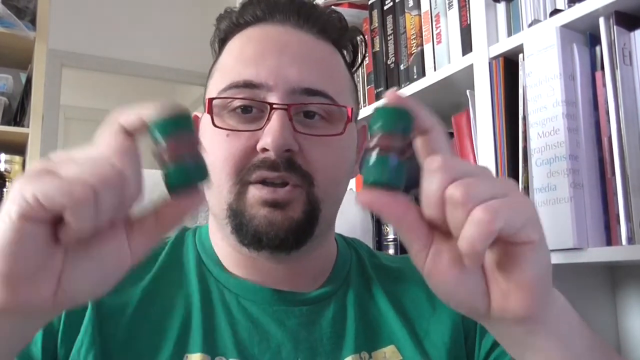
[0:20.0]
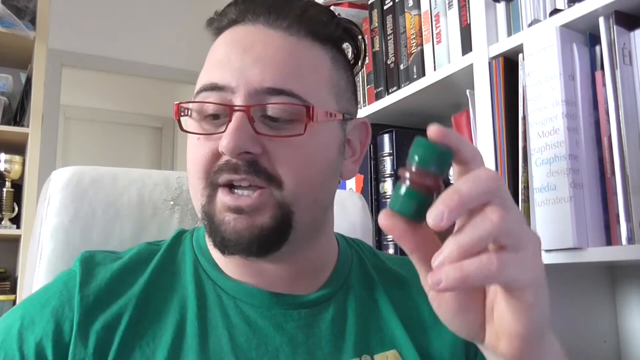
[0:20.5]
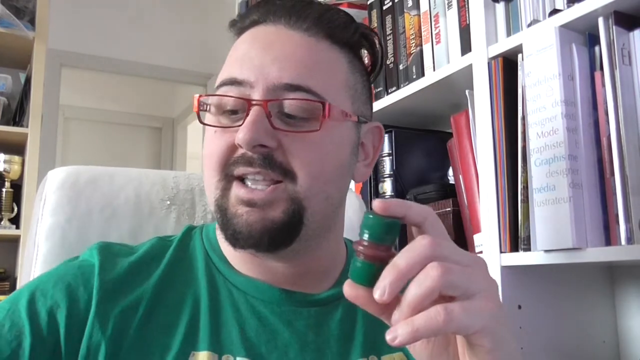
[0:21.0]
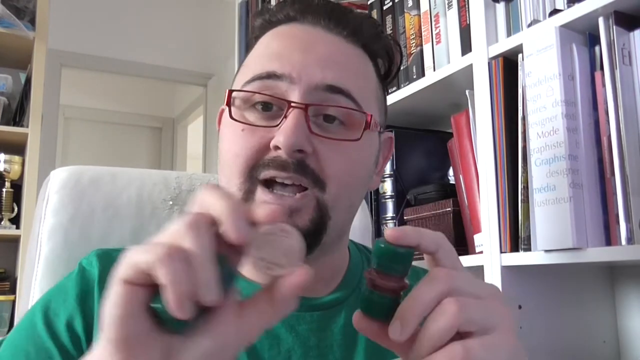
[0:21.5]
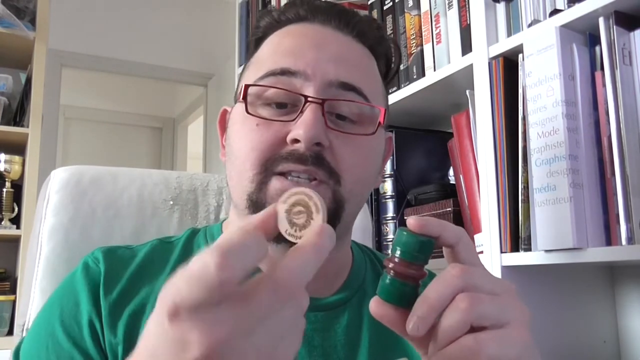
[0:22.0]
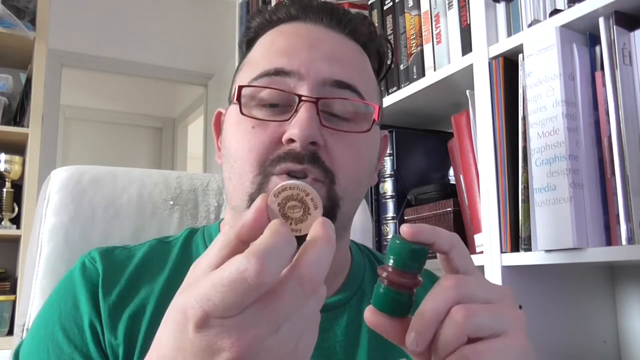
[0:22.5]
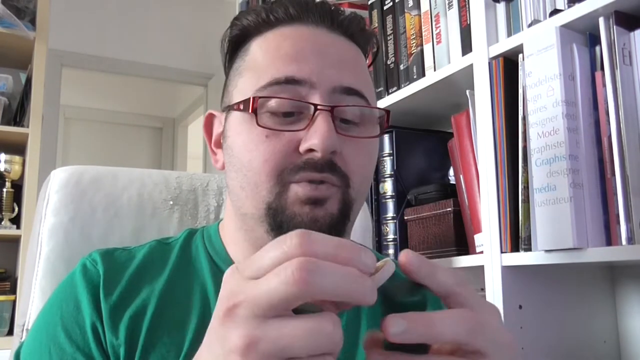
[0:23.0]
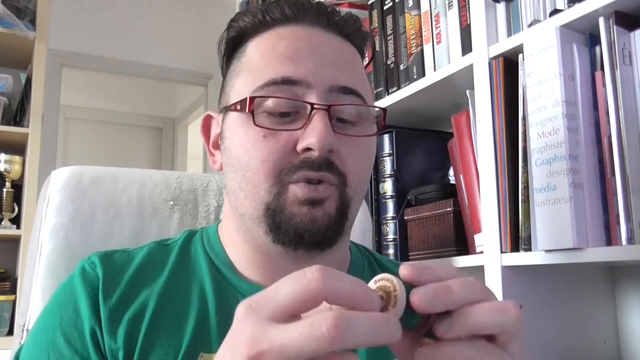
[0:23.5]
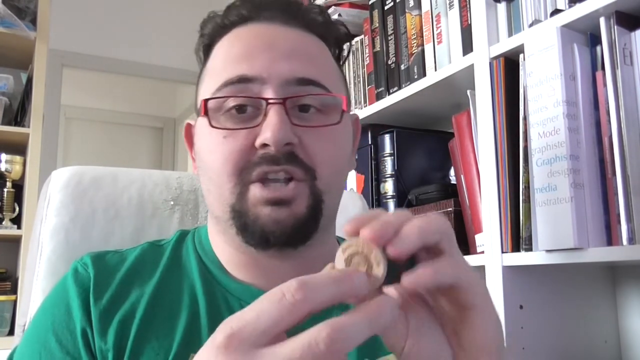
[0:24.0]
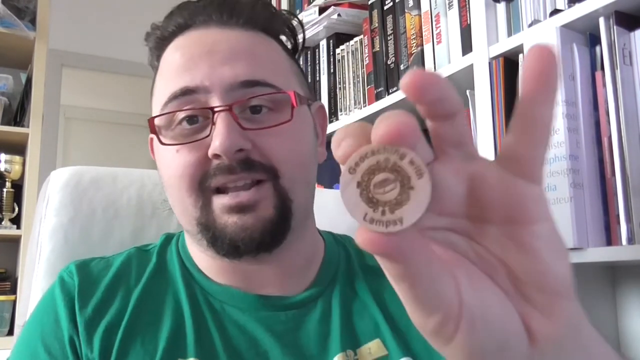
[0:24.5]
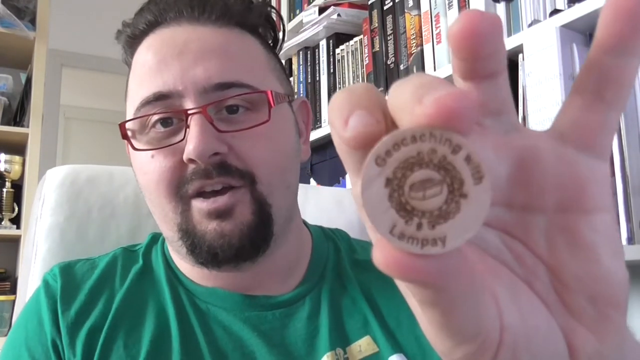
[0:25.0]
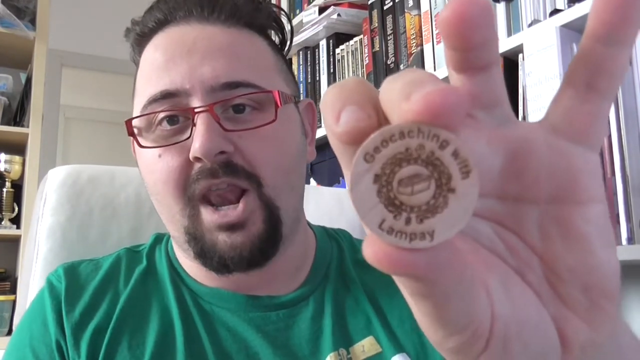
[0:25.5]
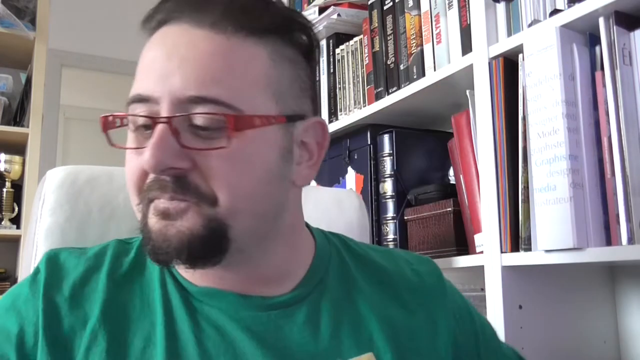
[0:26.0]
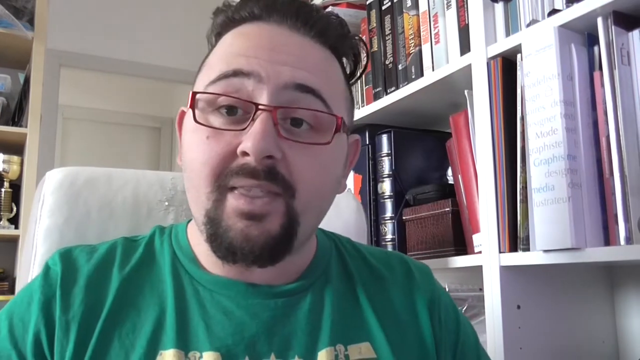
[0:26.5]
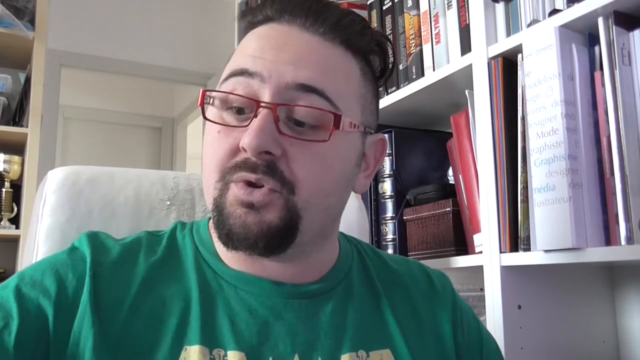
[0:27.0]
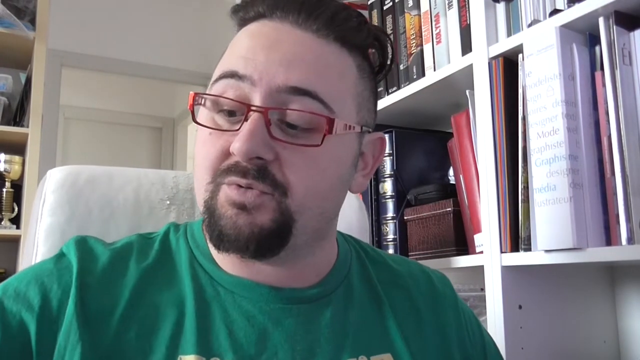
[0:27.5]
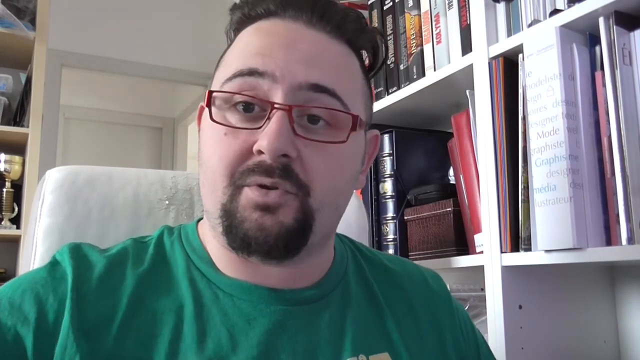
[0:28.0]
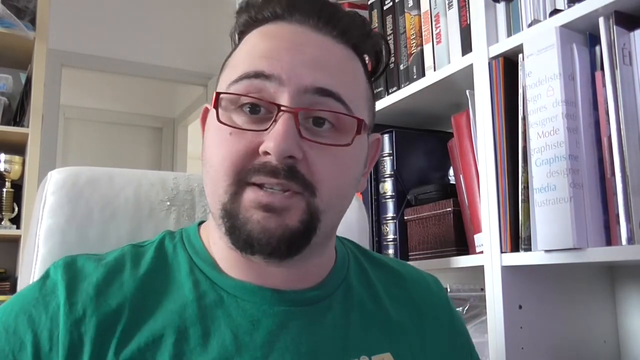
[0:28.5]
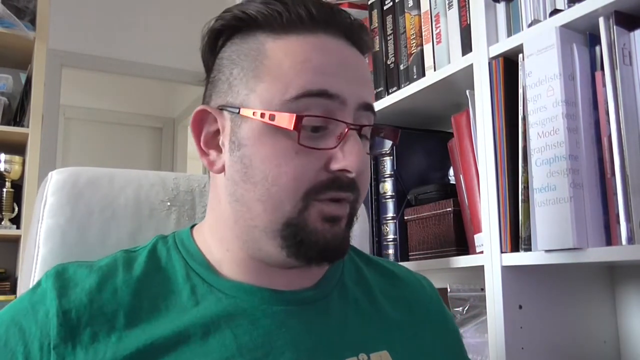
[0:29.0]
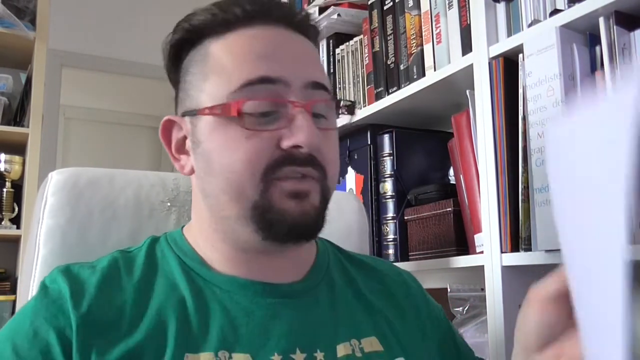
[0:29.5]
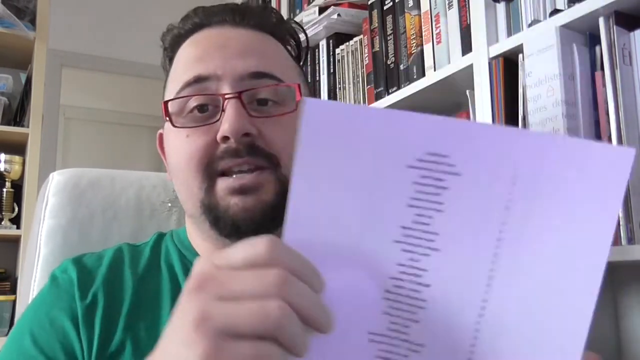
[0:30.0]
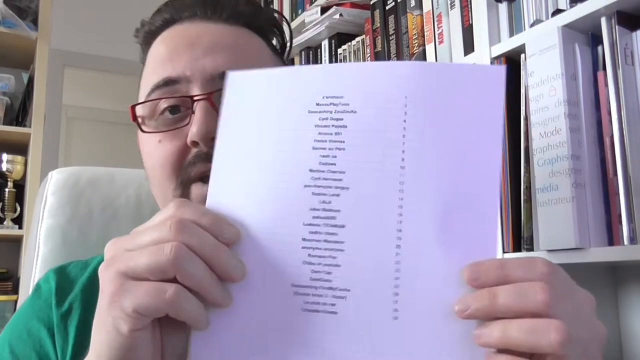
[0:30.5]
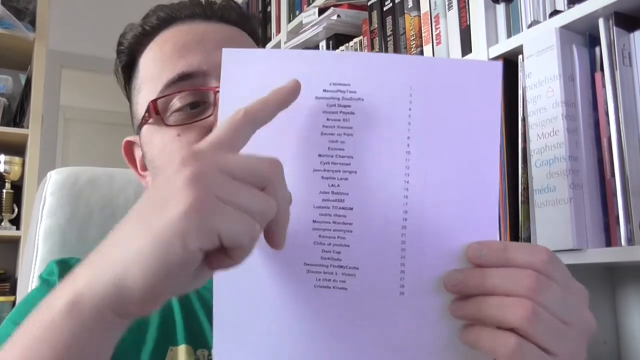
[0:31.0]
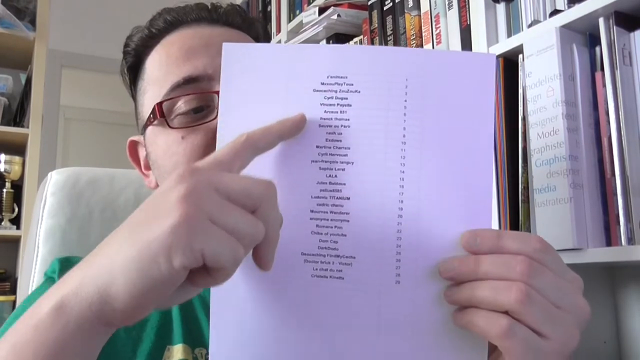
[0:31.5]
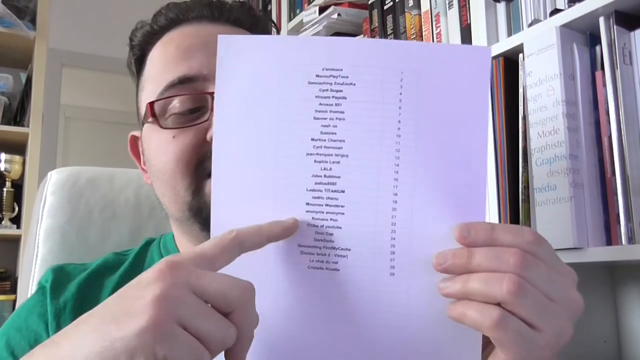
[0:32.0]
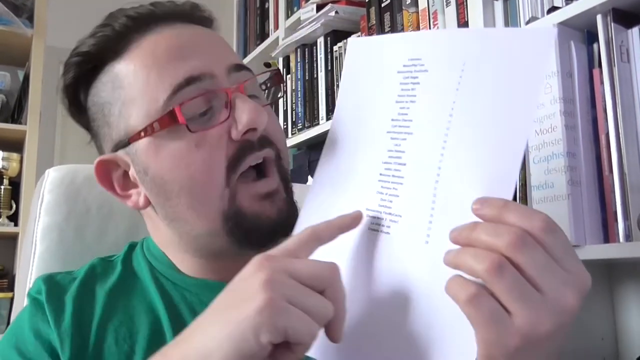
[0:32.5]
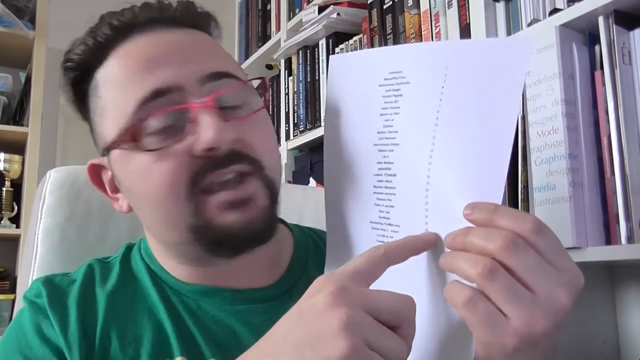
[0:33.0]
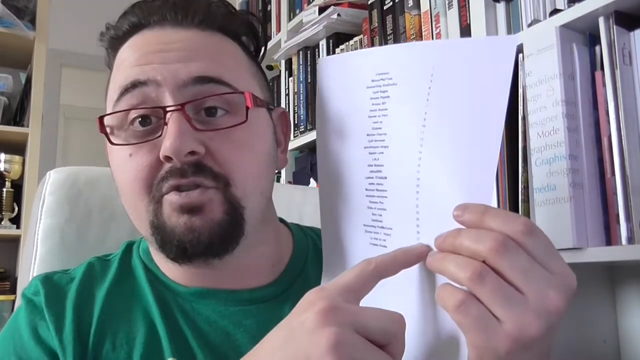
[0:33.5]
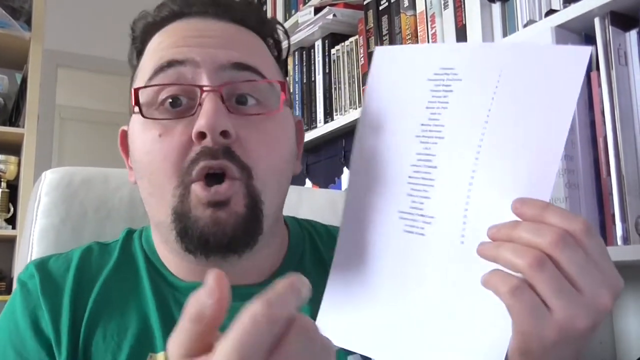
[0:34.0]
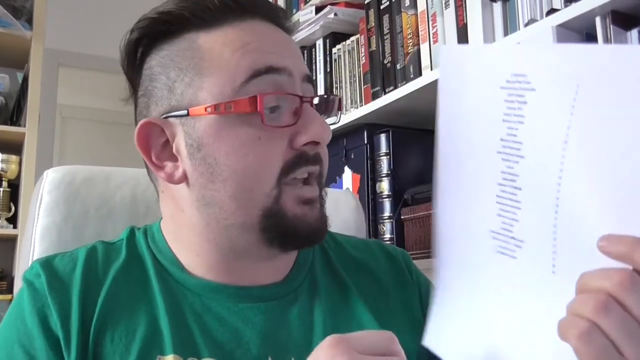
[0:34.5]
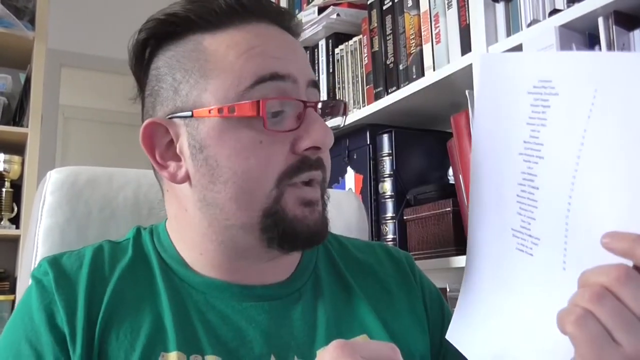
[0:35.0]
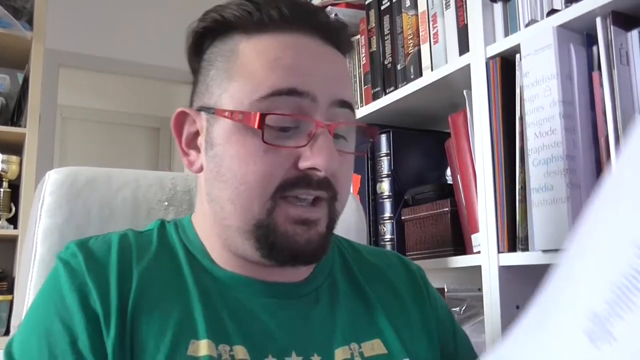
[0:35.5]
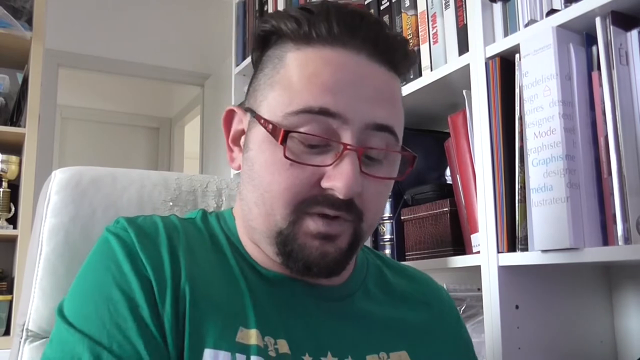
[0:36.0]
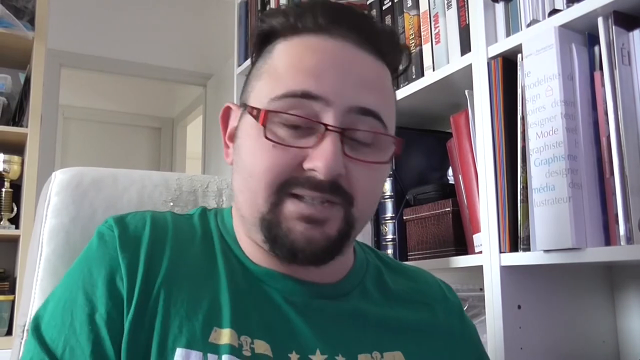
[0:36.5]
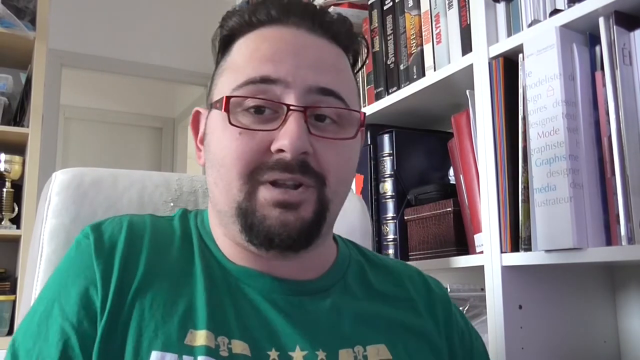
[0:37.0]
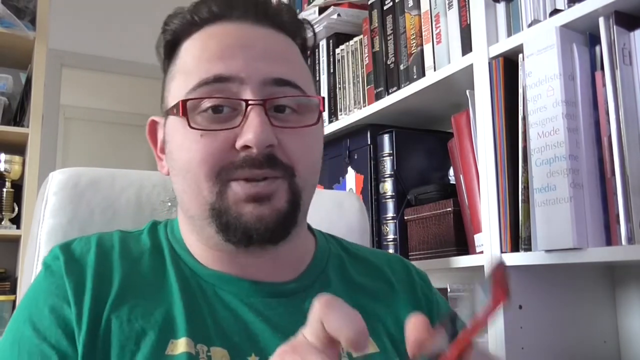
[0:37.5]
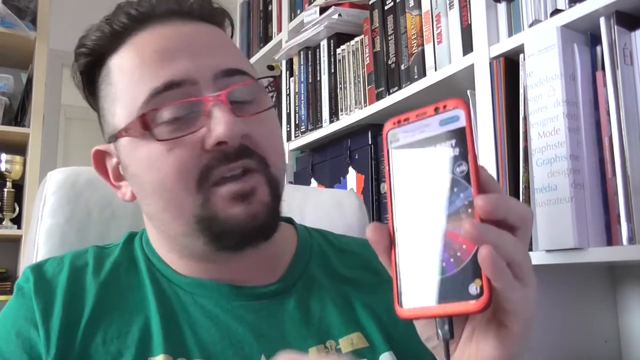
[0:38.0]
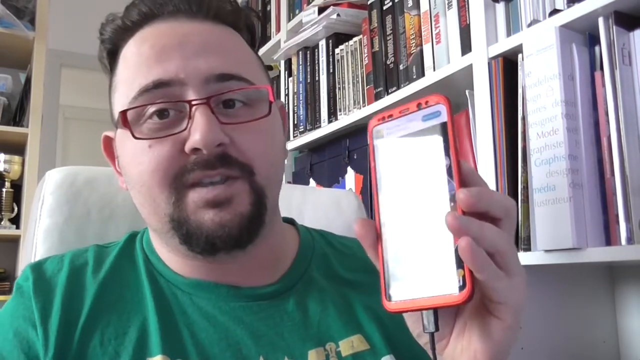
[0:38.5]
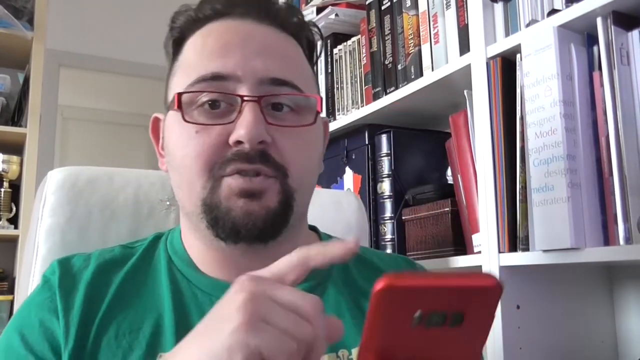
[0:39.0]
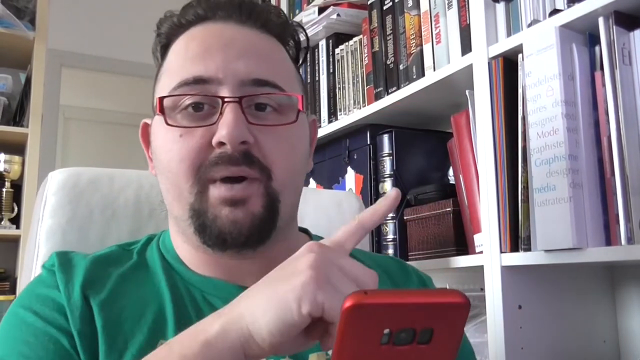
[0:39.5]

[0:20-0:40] In a room inside the house, the man shows what he has created with his own hands, a small design. He has written down all the things he used to create it.